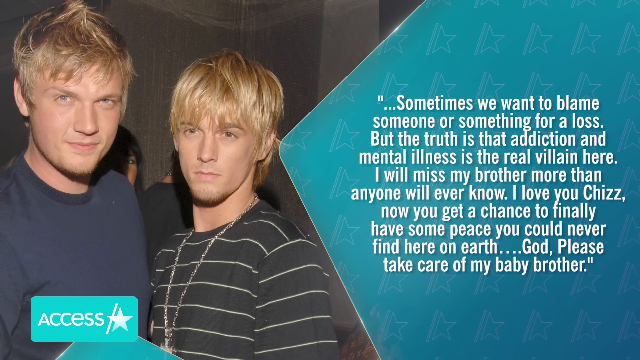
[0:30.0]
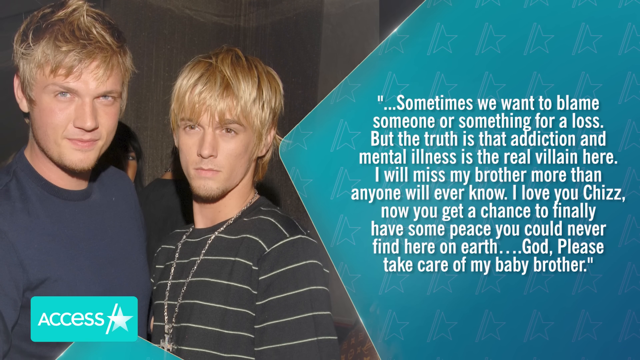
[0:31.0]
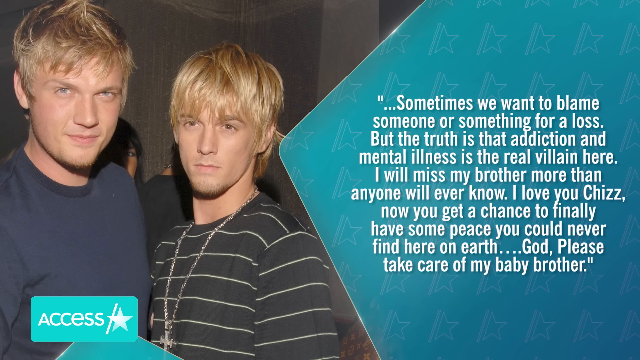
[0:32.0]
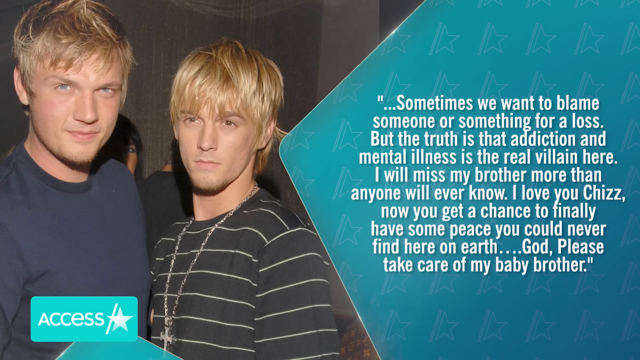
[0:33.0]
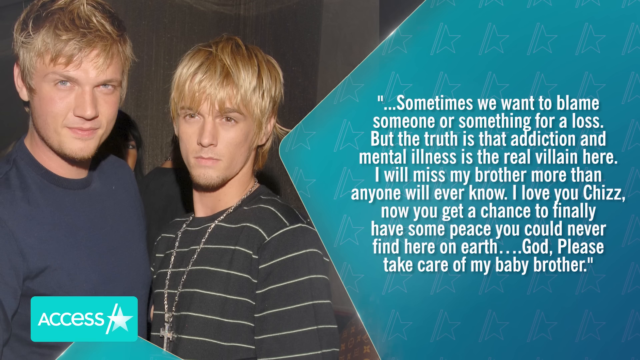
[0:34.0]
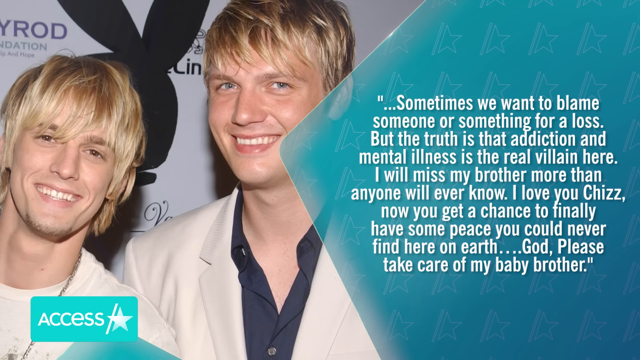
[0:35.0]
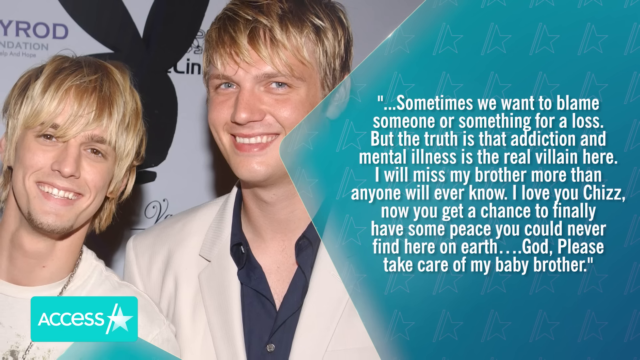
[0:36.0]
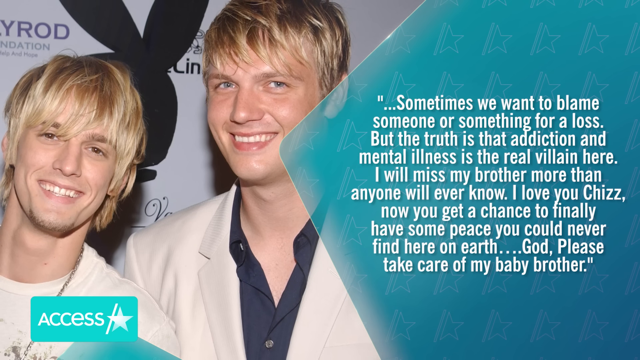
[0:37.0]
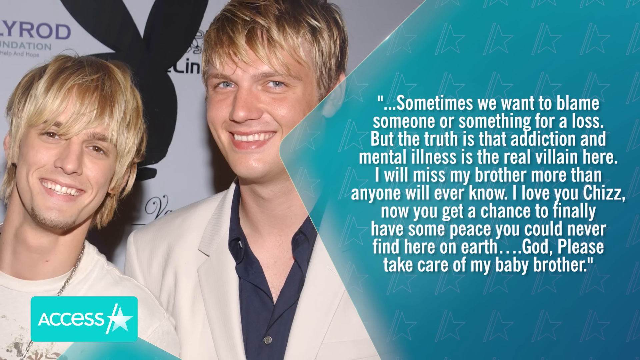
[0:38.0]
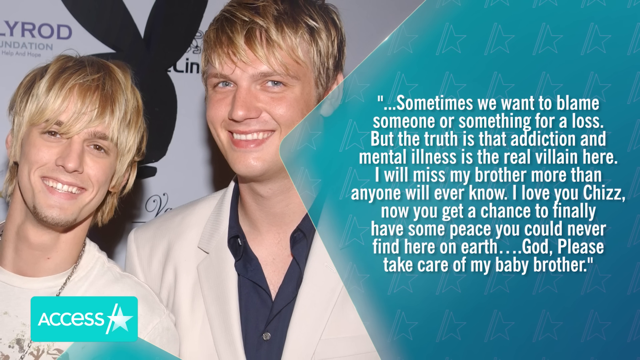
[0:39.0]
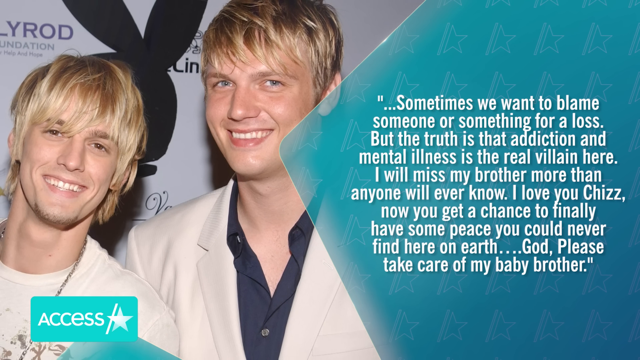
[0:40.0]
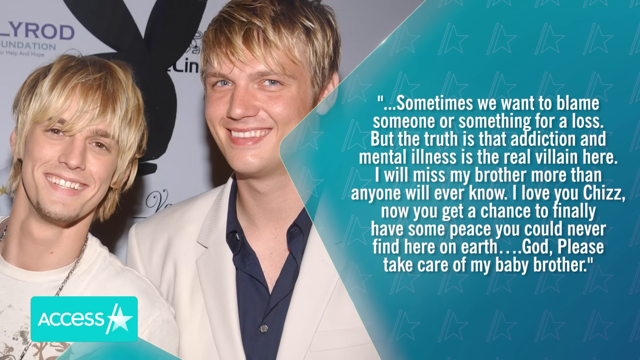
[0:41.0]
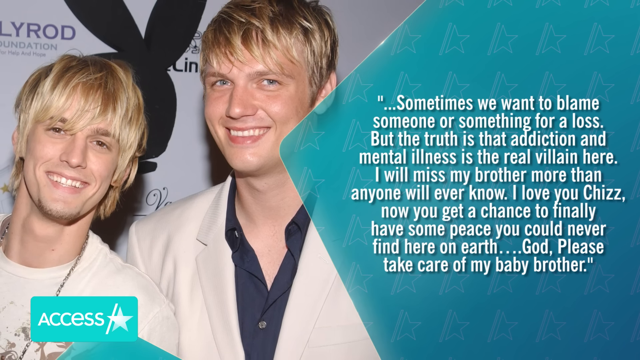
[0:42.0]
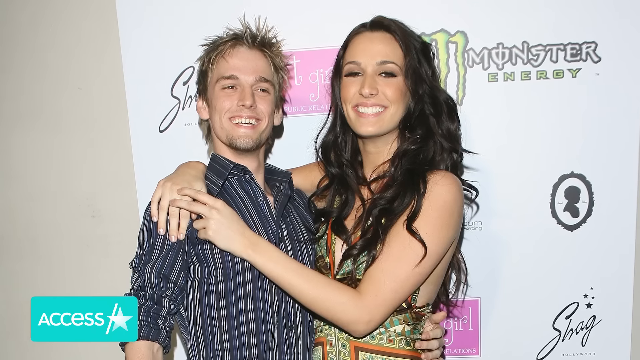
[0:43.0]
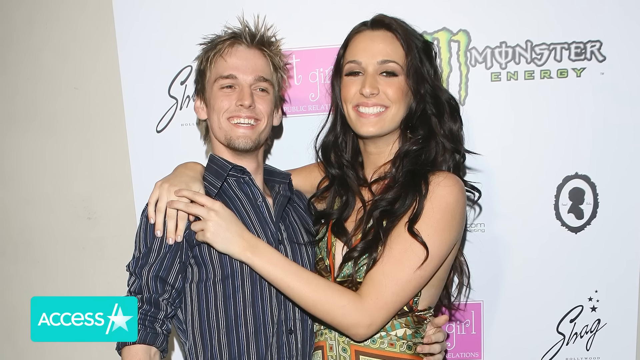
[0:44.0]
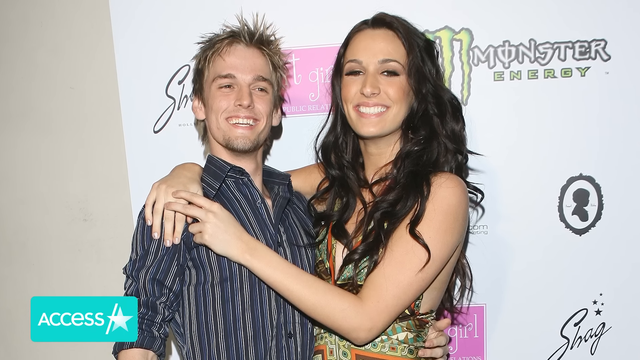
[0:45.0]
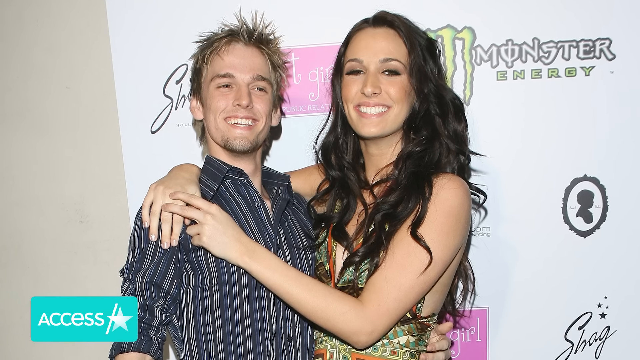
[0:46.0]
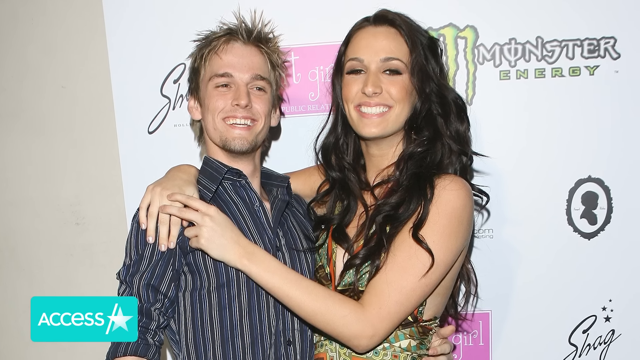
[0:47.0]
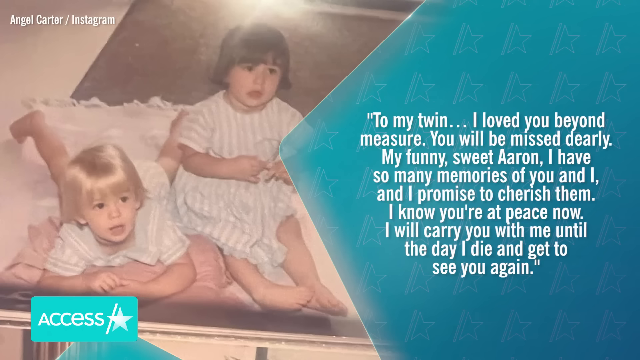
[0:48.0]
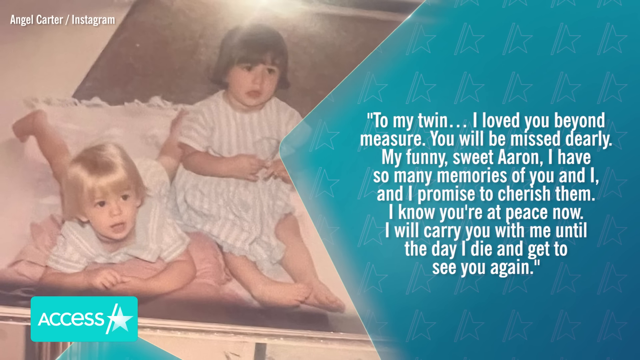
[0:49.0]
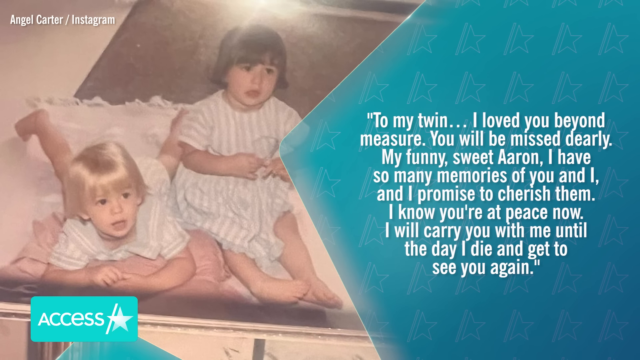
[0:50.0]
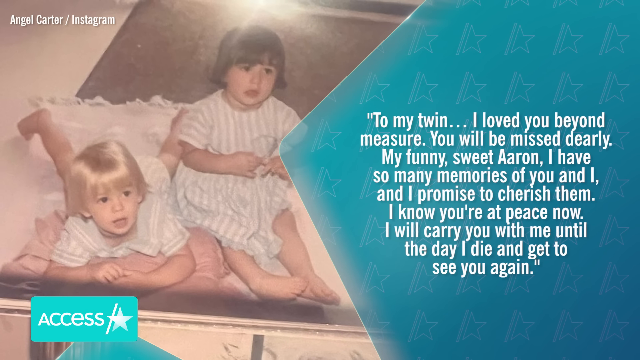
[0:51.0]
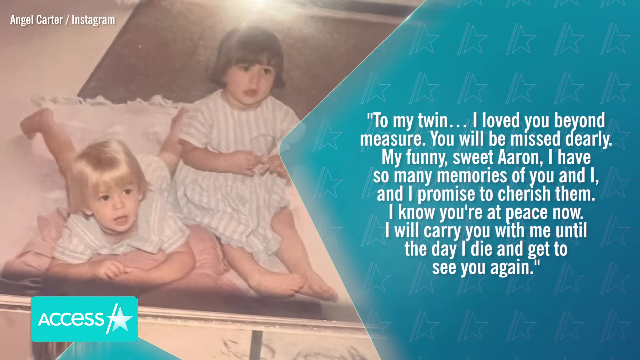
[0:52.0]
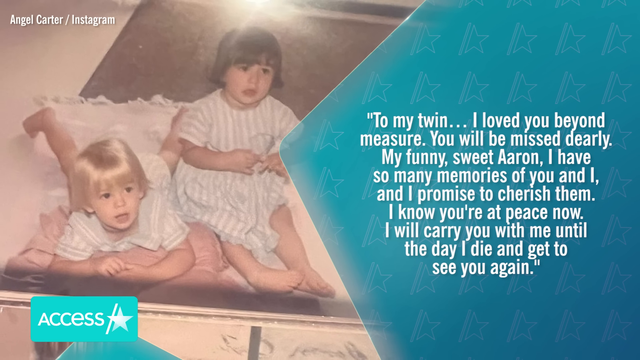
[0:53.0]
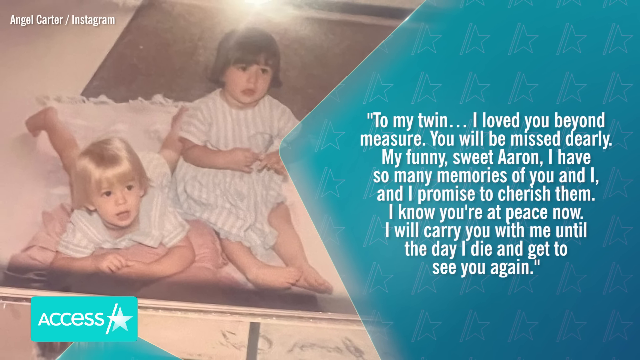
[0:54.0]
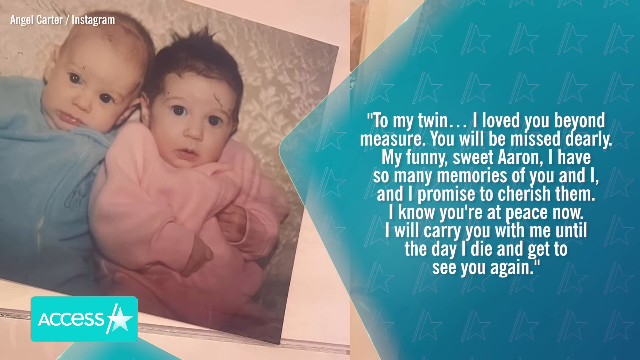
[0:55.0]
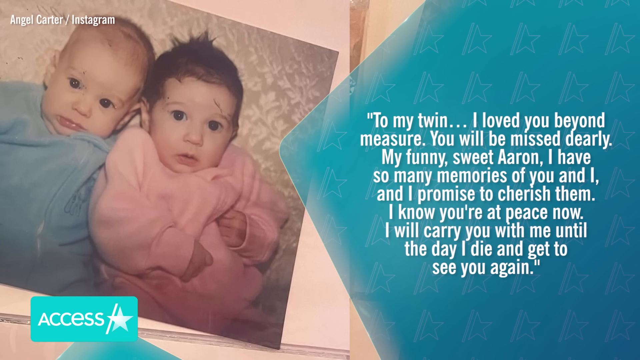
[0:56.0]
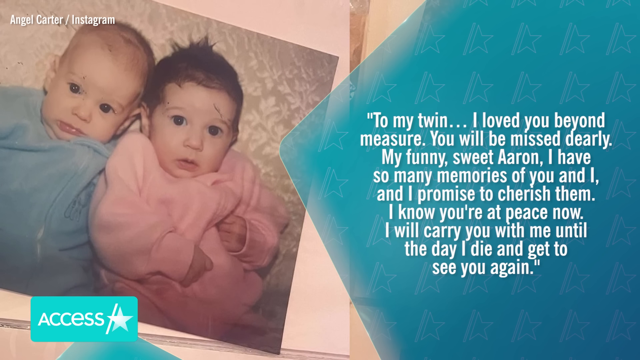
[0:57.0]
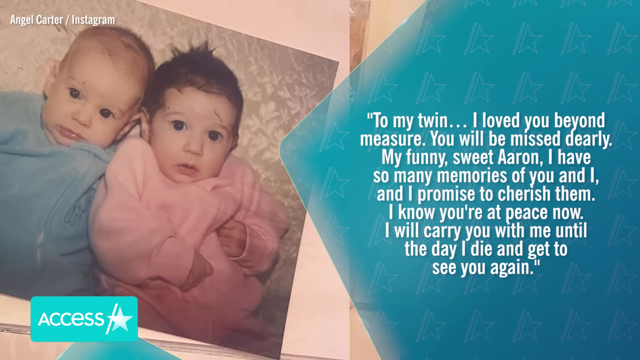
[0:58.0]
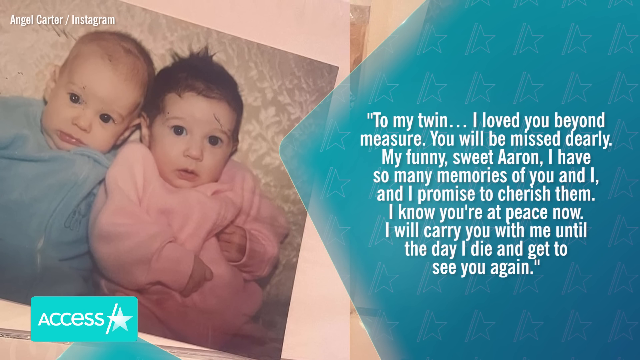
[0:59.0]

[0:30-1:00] On the left side Nick Carter and Aaron Carter are together, and on the right side is a quote. Another picture of the two of them appears on the left, both smiling and looking very happy, with Aaron Carter on the left and Nick Carter on the right. The quote on the right, words from Nick Carter, reads: "Sometimes we want to blame someone or something for a loss. But the truth is that addiction and mental illness is the real villain here. I will miss my brother more than anyone will ever know. I love you, Chizz. Now you get the chance to finally have some peace. You can never find here on earth. God, please take care of my baby brother." The scene then shows Aaron Carter with a woman who has her arms and hands wrapped around him; both smile and look very happy. Next, another childhood picture appears on the left with a different quote on the right, followed by baby pictures on the left while that quote remains on the right.